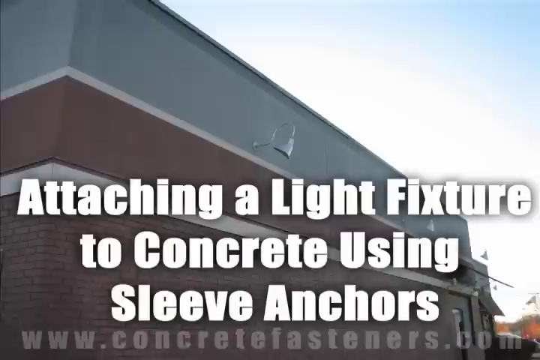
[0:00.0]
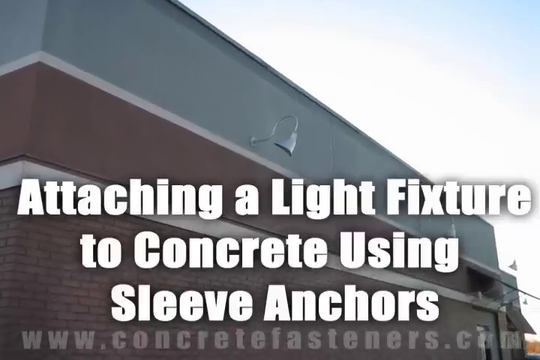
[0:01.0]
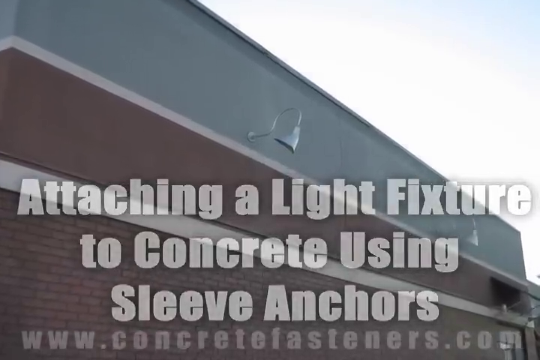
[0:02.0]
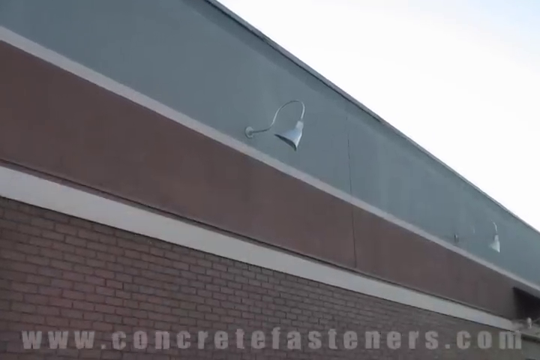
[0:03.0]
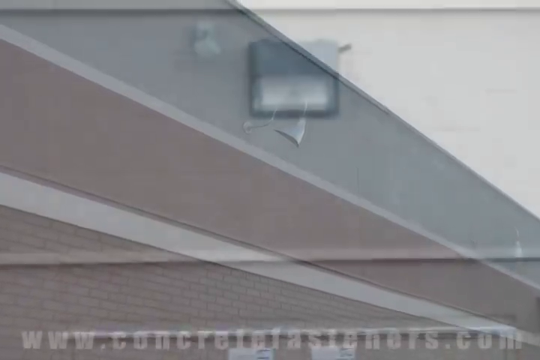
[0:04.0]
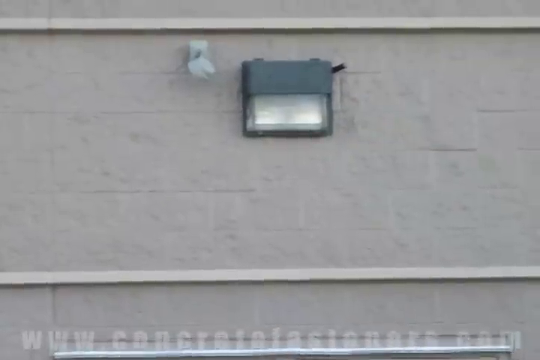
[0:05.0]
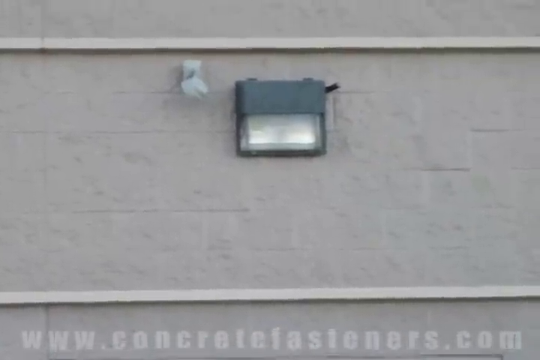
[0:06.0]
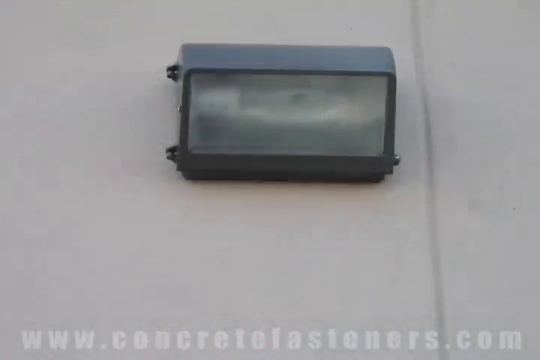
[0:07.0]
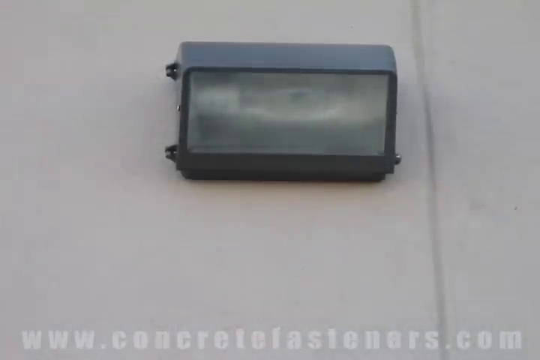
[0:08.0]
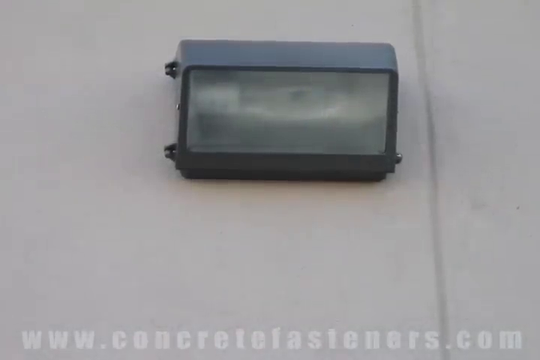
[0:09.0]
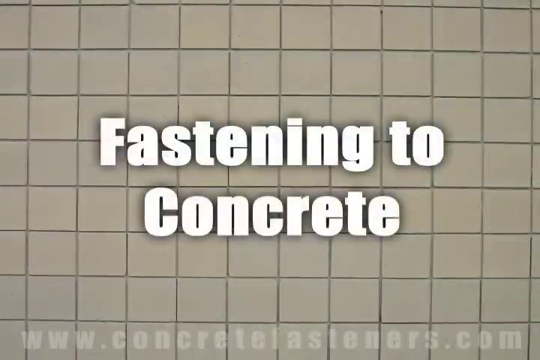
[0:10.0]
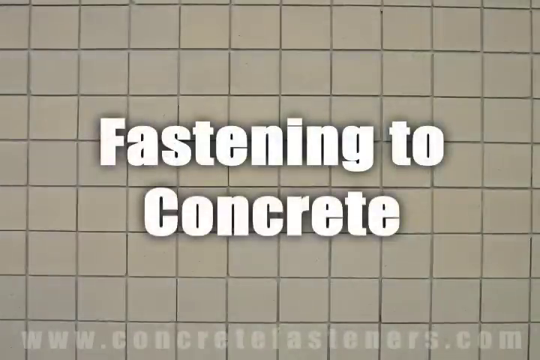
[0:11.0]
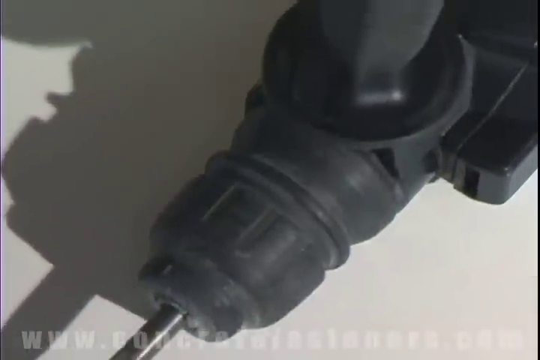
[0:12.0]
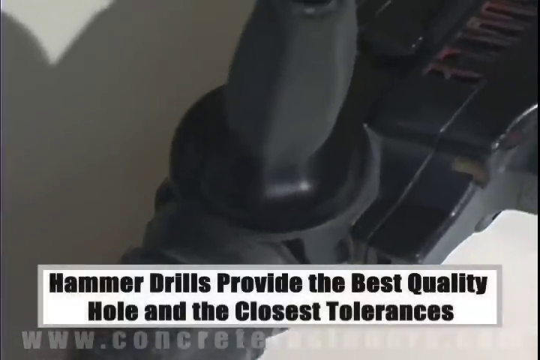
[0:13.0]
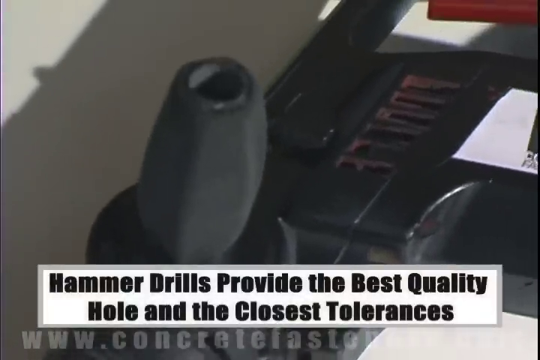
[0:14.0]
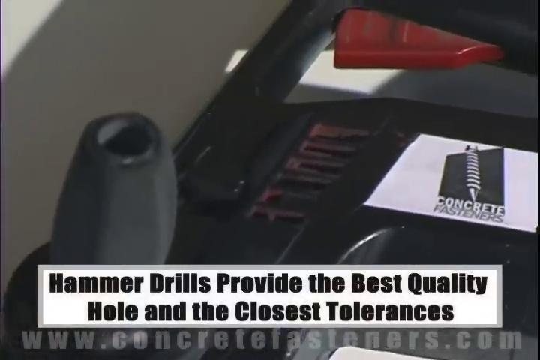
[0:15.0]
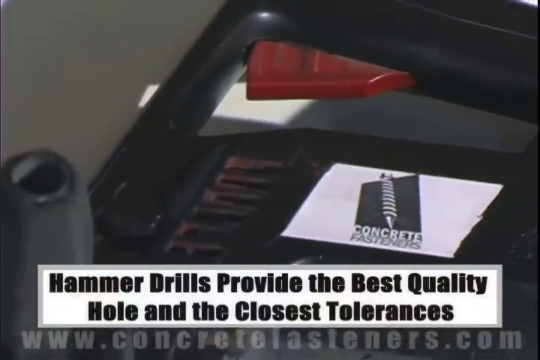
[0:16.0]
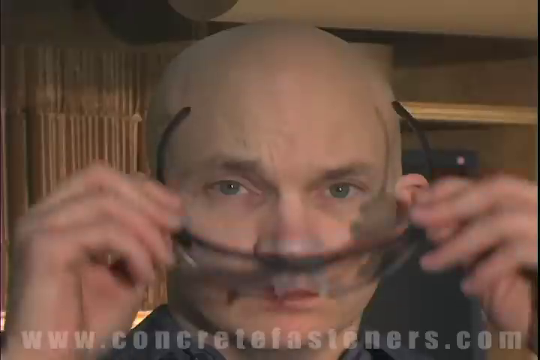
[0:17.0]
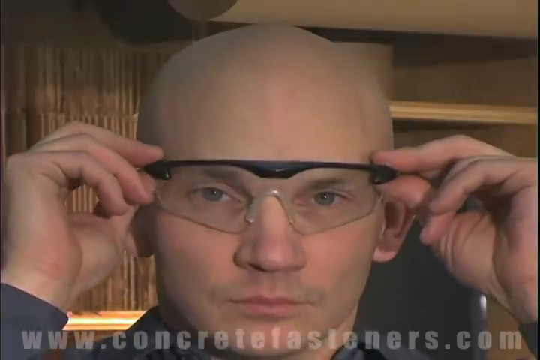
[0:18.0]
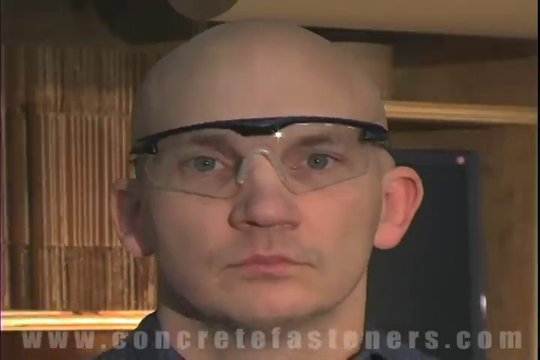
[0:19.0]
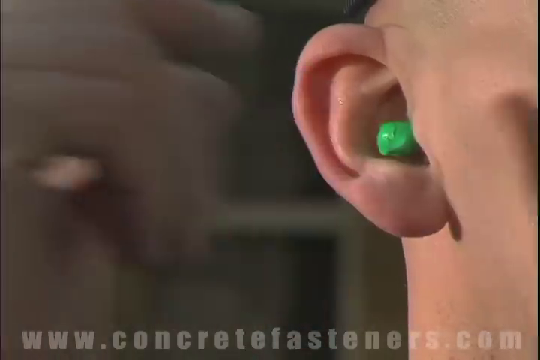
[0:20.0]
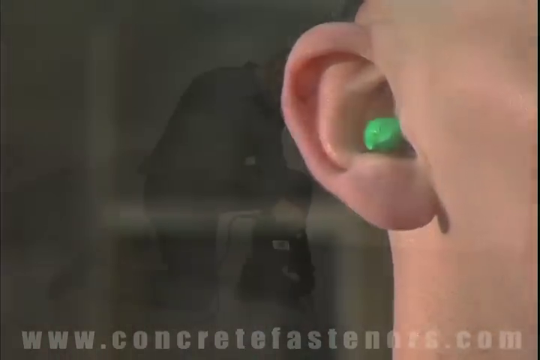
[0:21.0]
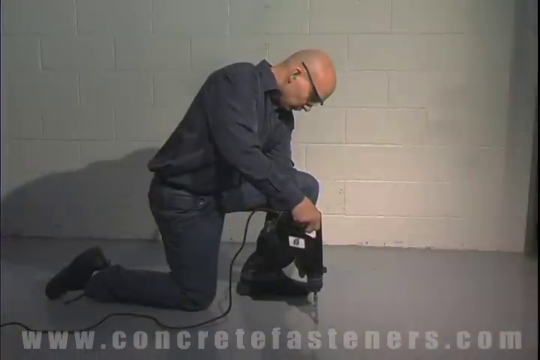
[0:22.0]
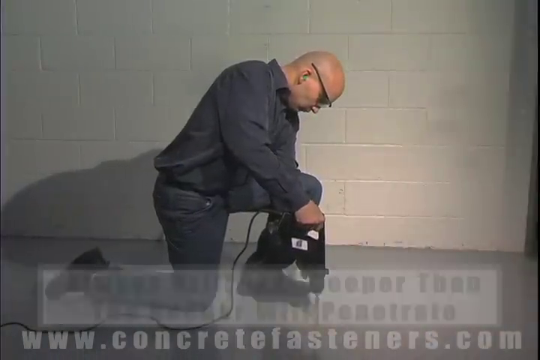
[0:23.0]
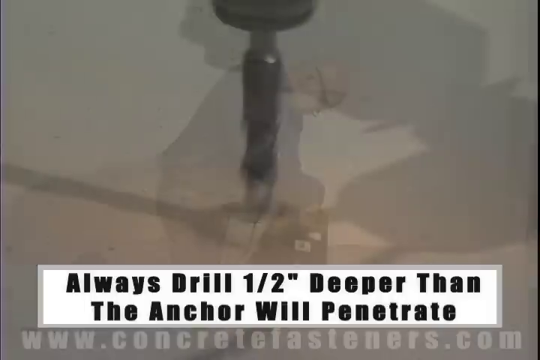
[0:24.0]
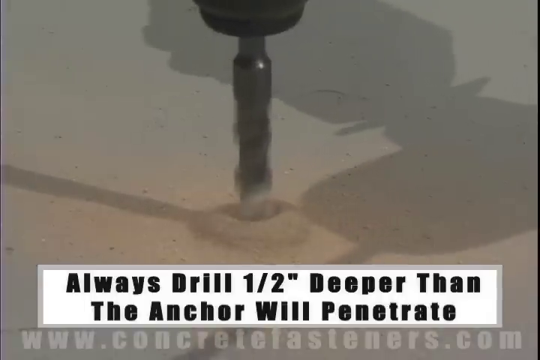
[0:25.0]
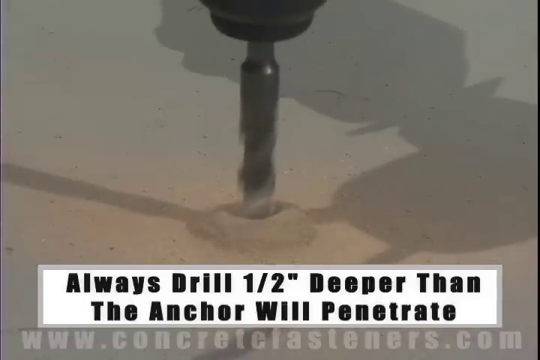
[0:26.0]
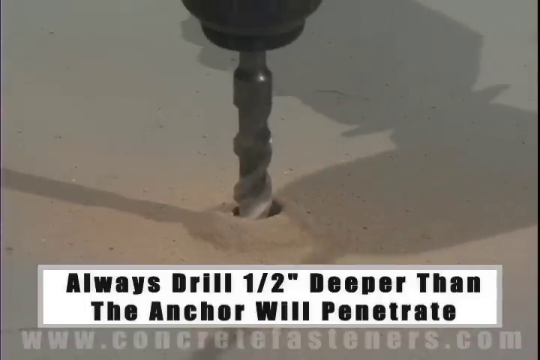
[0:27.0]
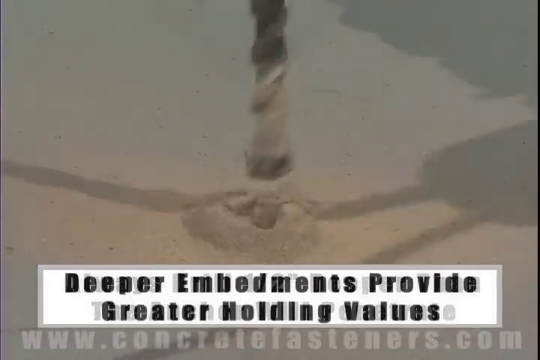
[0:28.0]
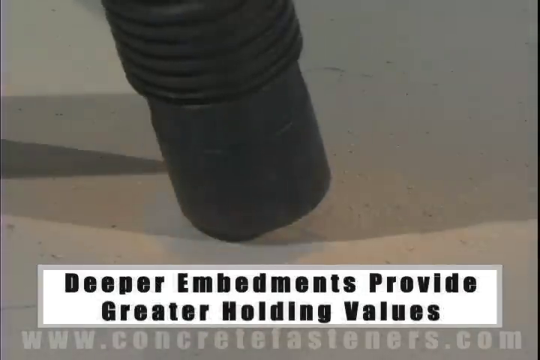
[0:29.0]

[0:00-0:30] The camera pans in to a light fixture on a concrete wall, followed by another light fixture on another concrete wall and a third light fixture. The video then returns to fastening to a concrete wall, and a hammer drill is shown. A man puts on safety glasses and ear protection, then drills into concrete with the drill, demonstrating that the hole should be drilled at least half an inch deeper than the anchor will penetrate. After the drilling, a vacuum apparently sucks up the remaining dust the drill left behind.